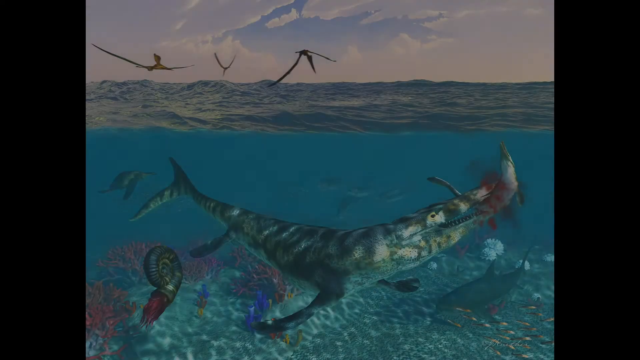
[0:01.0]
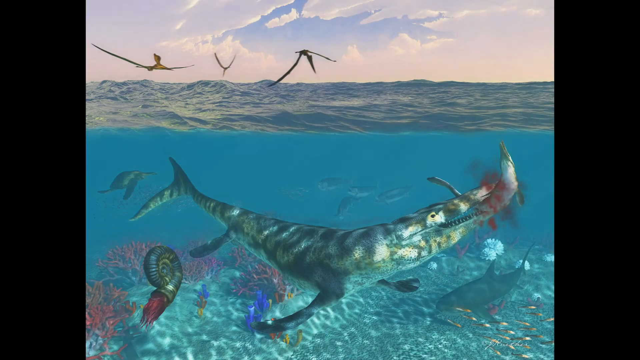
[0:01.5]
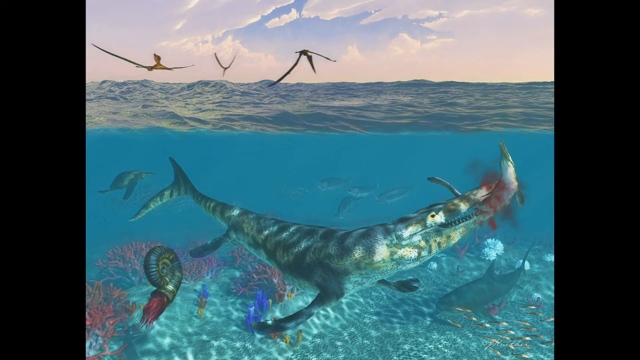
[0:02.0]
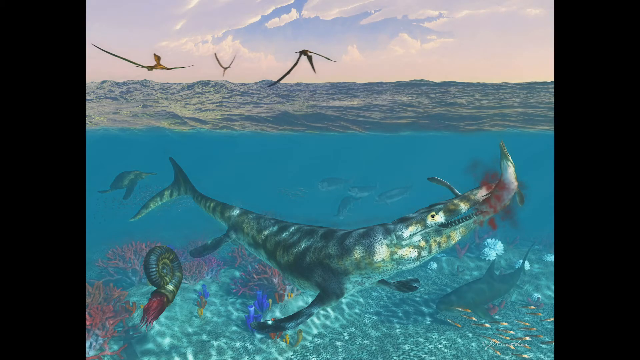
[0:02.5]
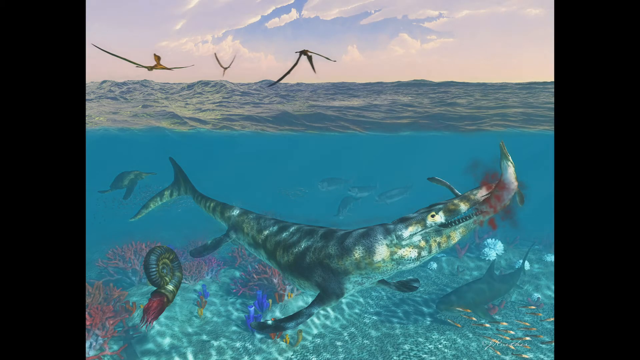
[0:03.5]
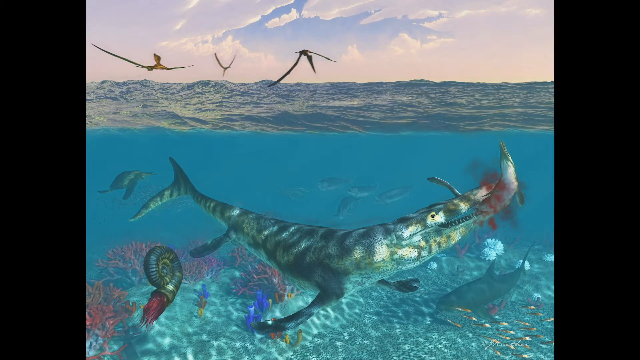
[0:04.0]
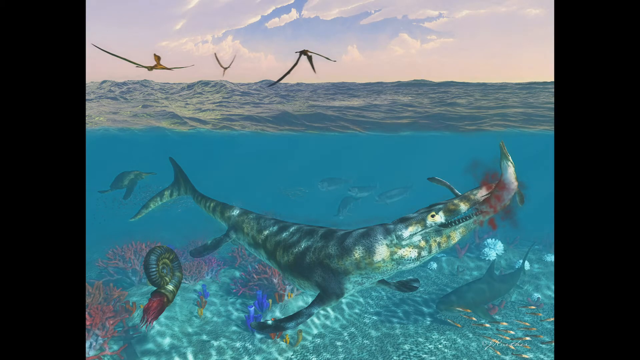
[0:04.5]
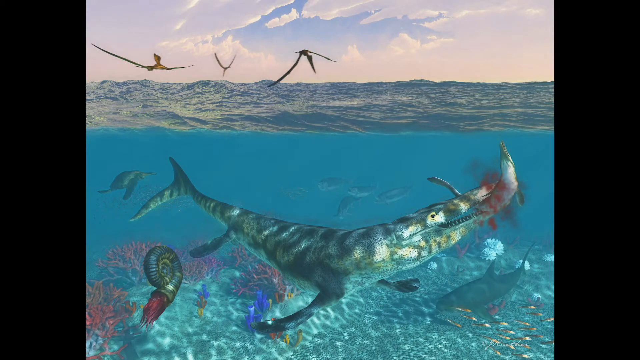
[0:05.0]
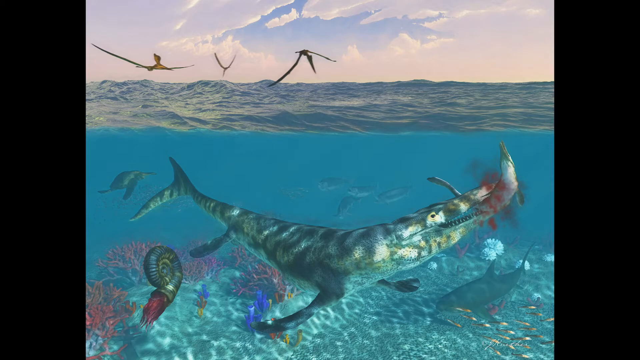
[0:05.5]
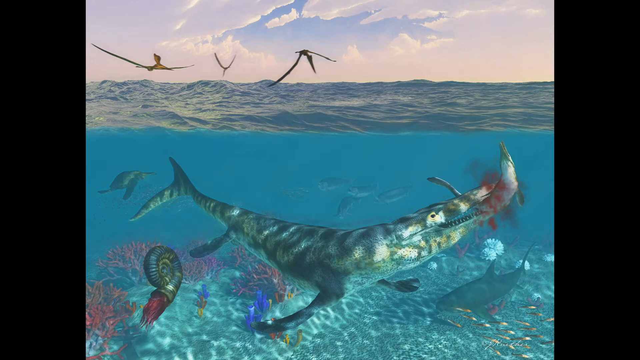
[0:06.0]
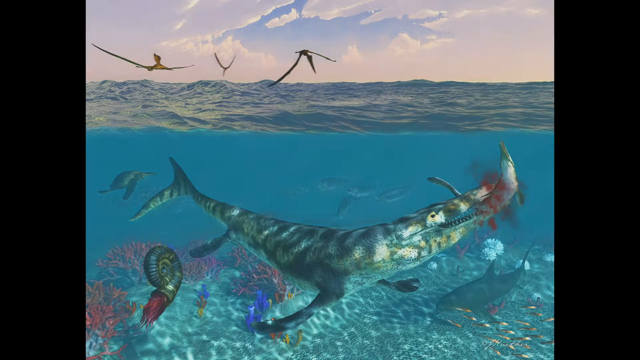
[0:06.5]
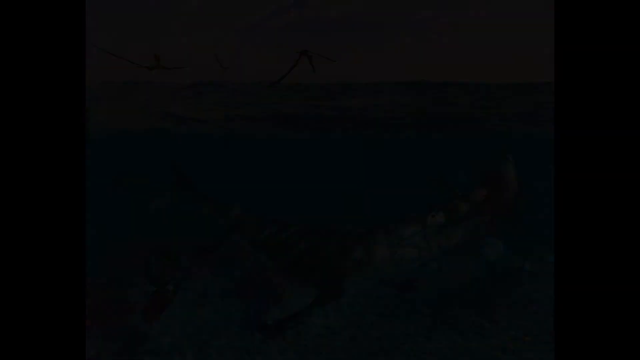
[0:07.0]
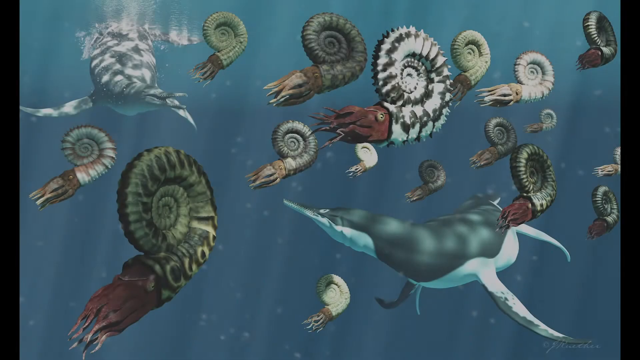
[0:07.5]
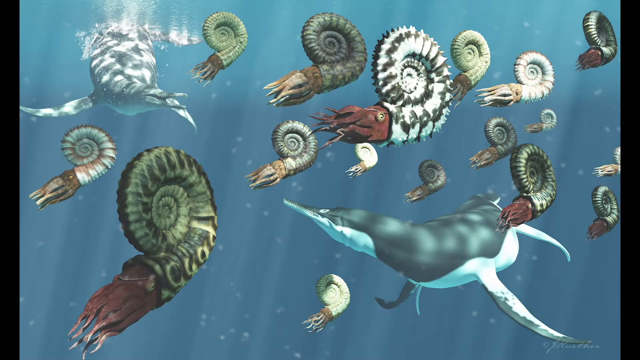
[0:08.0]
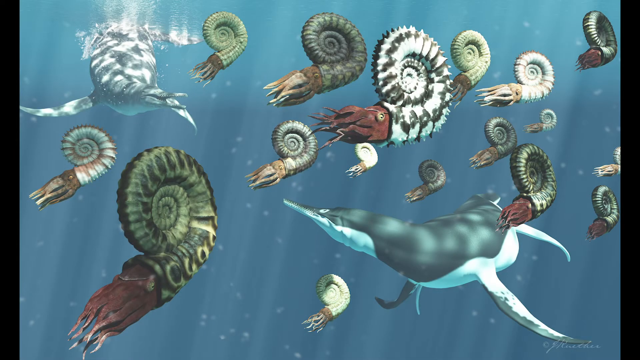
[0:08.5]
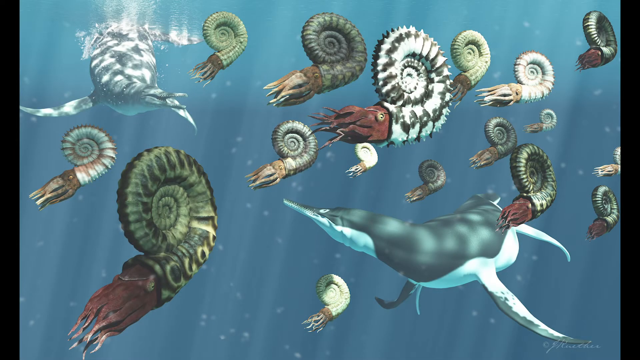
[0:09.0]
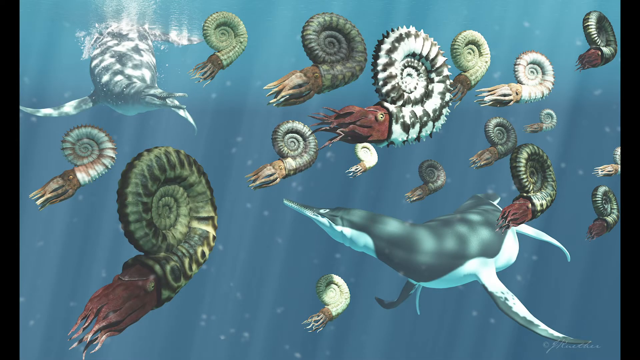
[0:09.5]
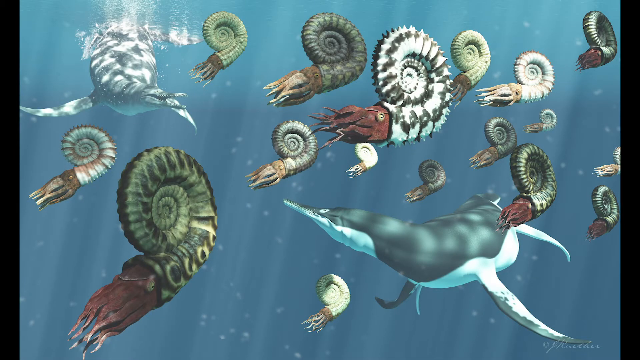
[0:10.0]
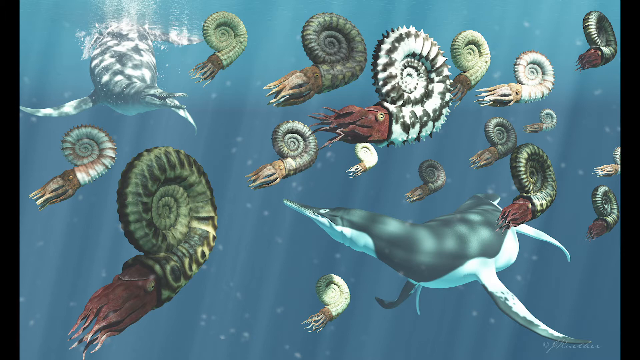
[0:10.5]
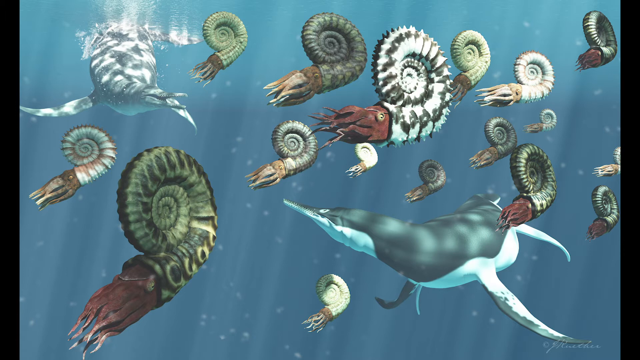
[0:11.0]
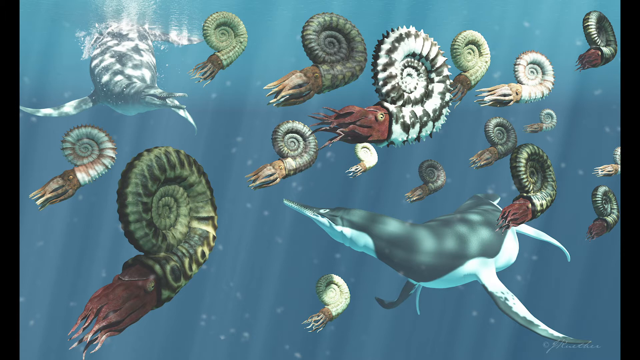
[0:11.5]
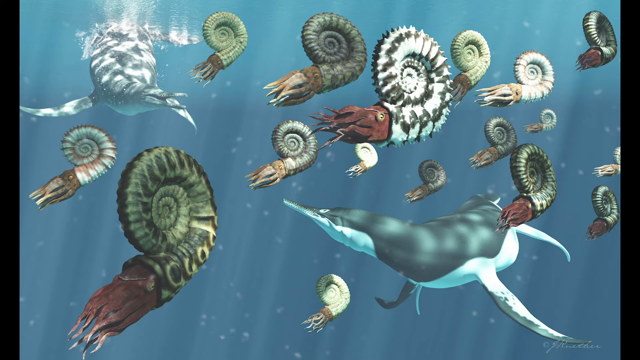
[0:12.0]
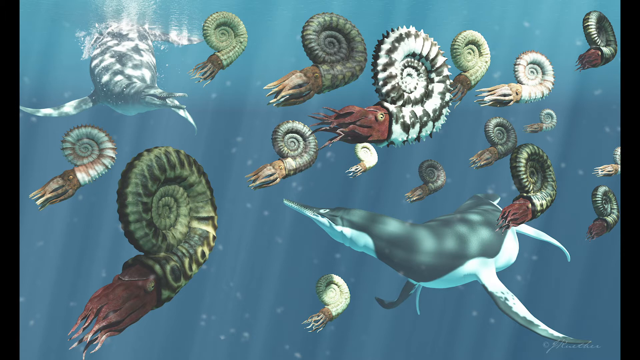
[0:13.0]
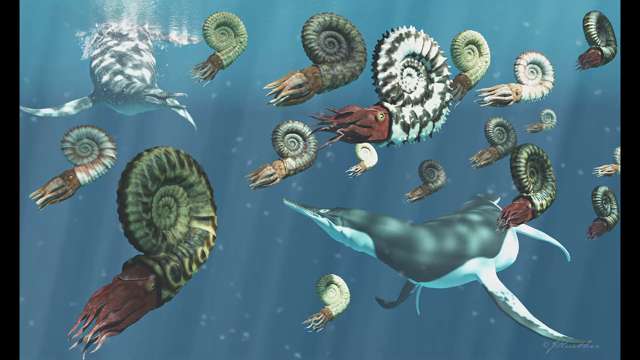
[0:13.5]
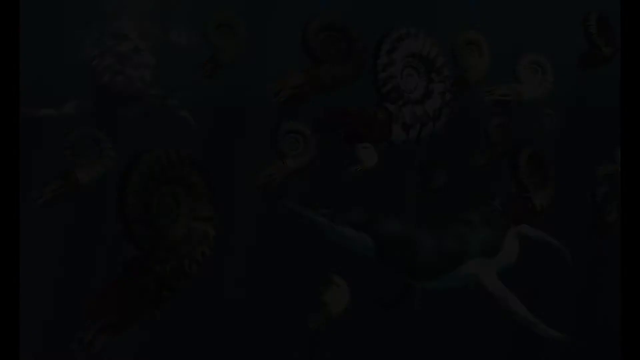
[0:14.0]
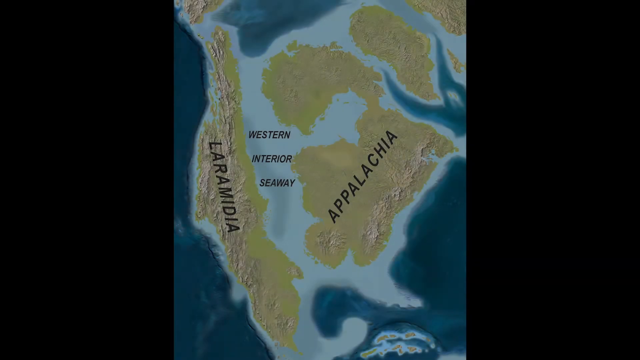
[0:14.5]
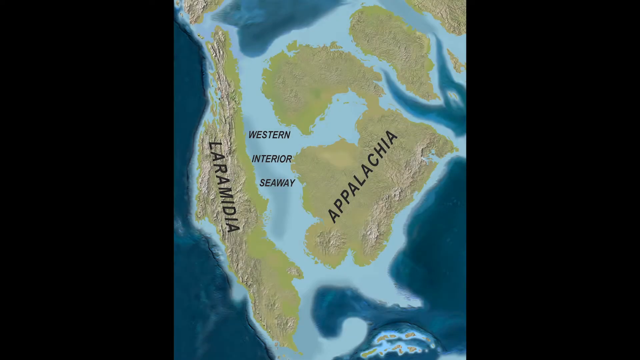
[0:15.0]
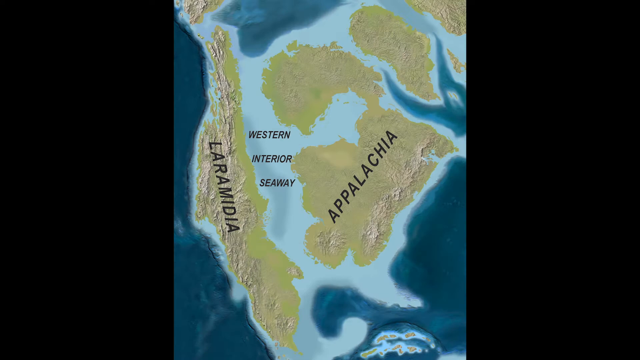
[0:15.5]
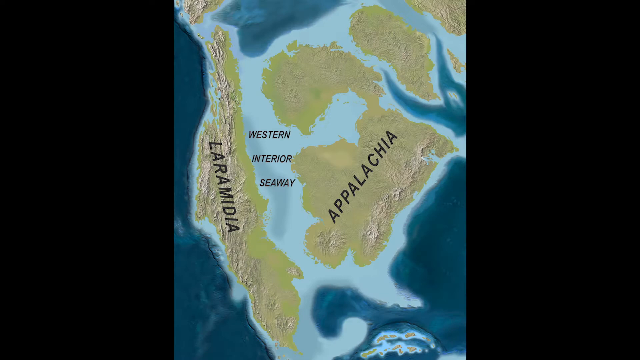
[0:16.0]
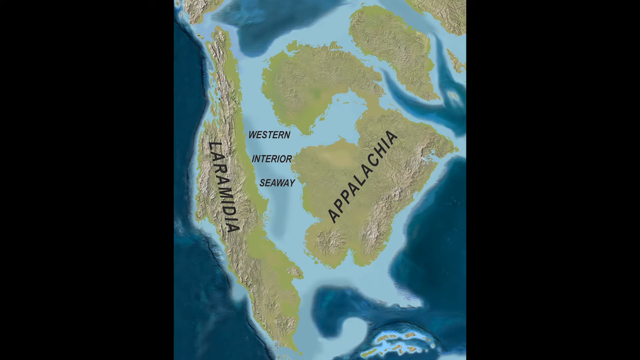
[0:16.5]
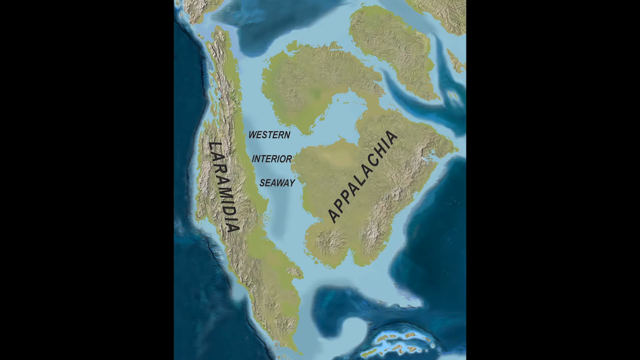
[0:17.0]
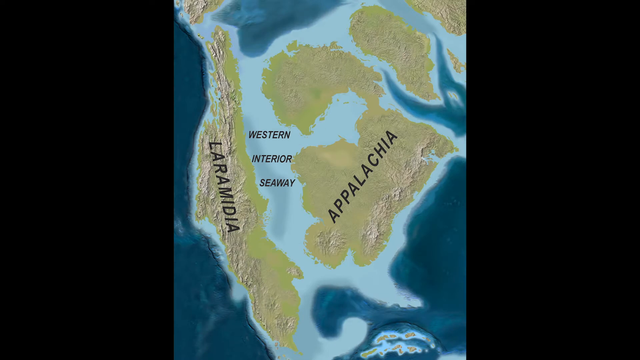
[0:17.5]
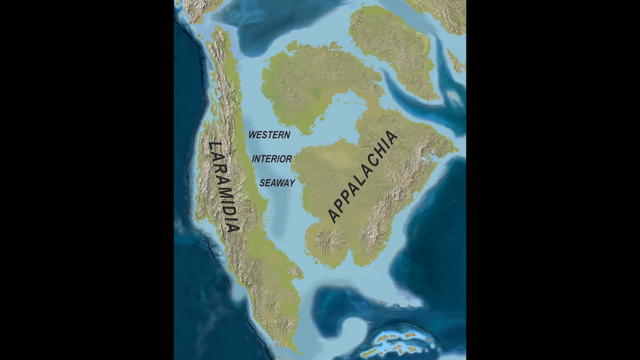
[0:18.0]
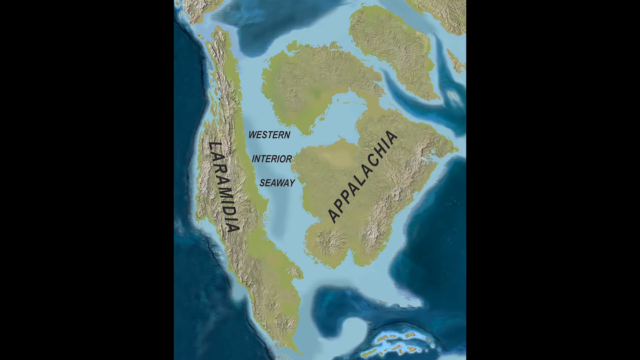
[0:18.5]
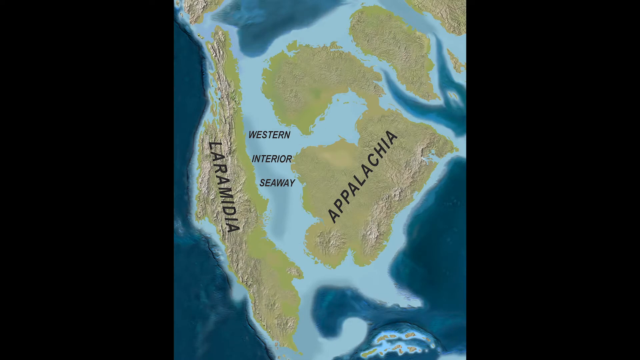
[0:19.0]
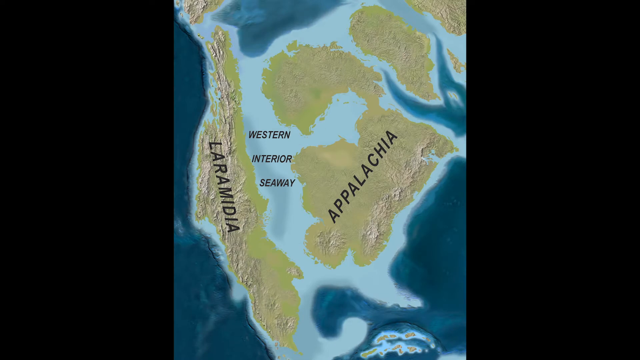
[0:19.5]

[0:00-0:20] A drawing shows what appears to be a prehistoric sea creature from a side view: the bottom three-fifths is underwater and the top two-fifths is the surface of the water, which looks relatively calm, like the top of a lake or maybe a calm ocean day. Some prehistoric birds fly overhead; there are three of them, all on the left half of the view. The leftmost has its wings stretched out sort of flat and flies sort of toward the viewer and to the right. The one furthest back has a Y shape, and the rightmost looks like an M shape, with the two peaks of the M sort of going toward its body. The prehistoric creature looks like an elongated shark or alligator with very smooth skin. Its back body has a smooth edge like a shark, while its front is more like an alligator or crocodile, with a wide jaw and a row of teeth. It seems to be biting into a smaller creature that looks sort of like a seal with a sharp beak, or perhaps a dolphin-looking creature with flippers on its side.